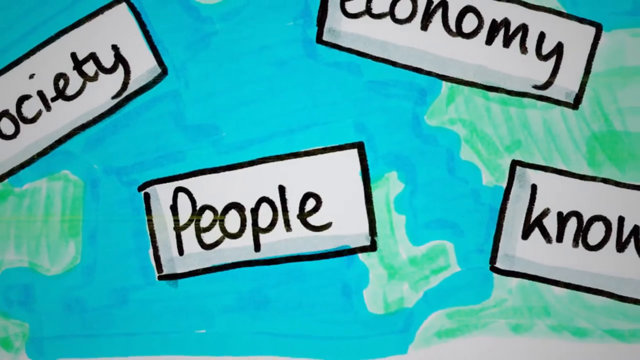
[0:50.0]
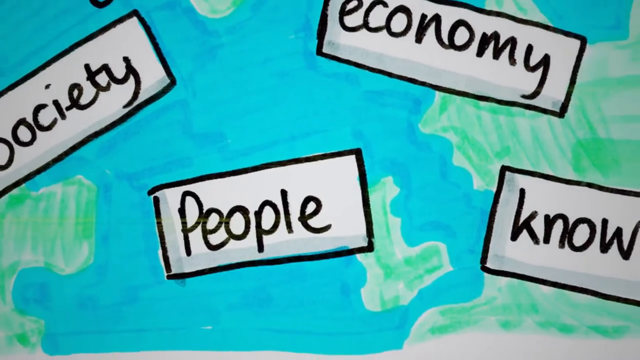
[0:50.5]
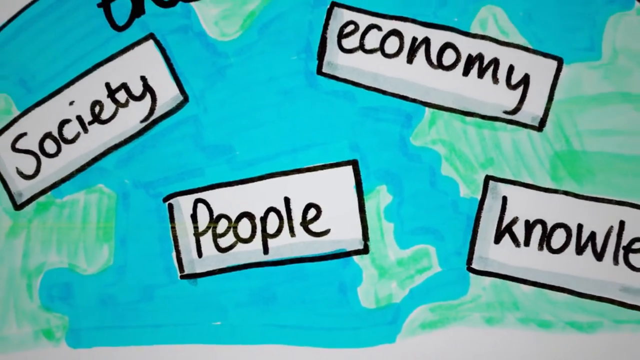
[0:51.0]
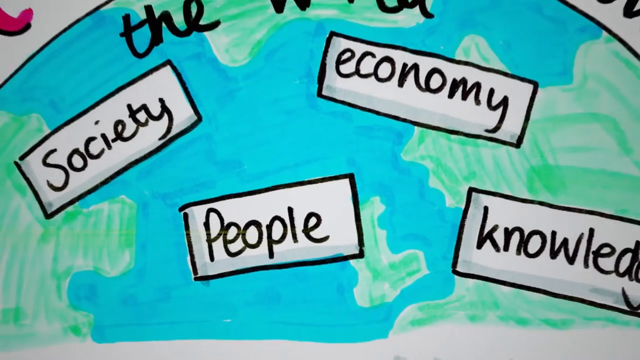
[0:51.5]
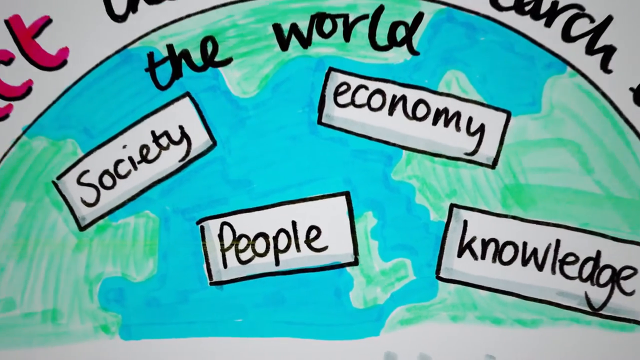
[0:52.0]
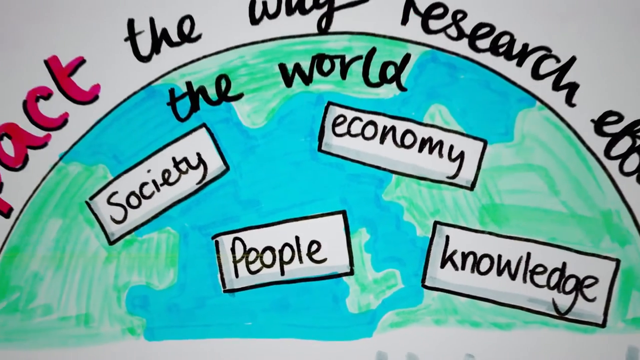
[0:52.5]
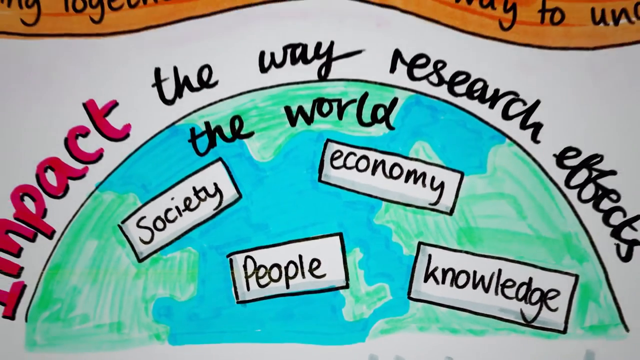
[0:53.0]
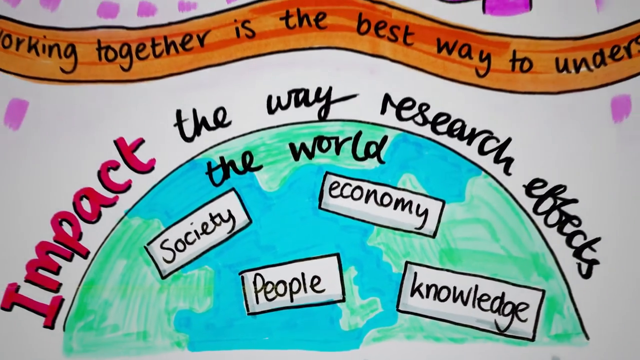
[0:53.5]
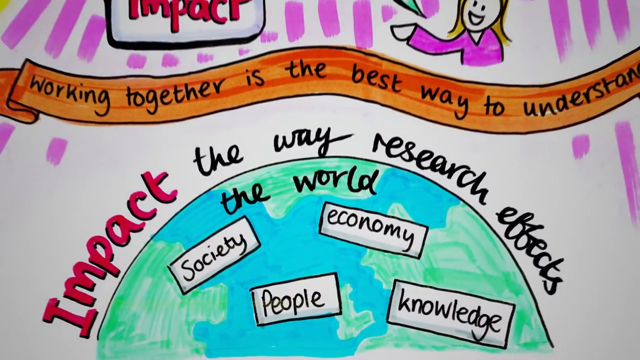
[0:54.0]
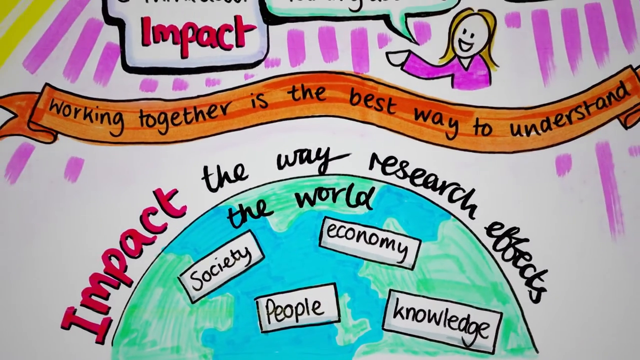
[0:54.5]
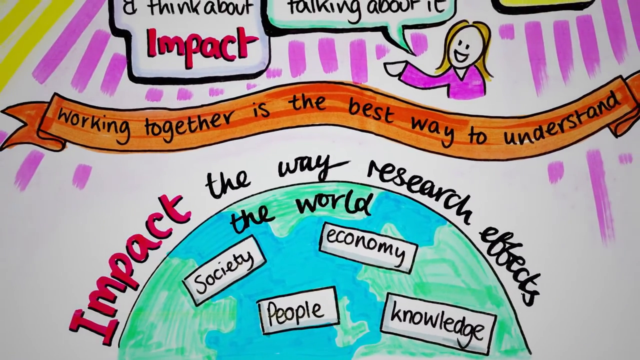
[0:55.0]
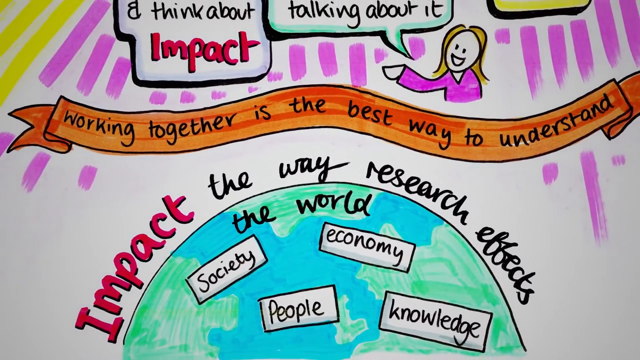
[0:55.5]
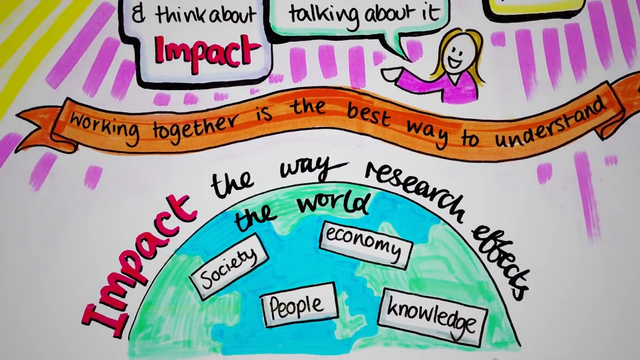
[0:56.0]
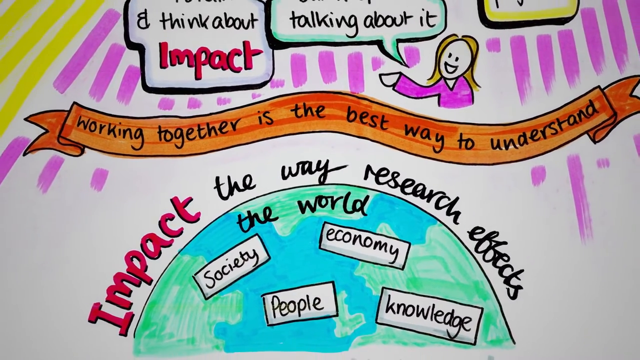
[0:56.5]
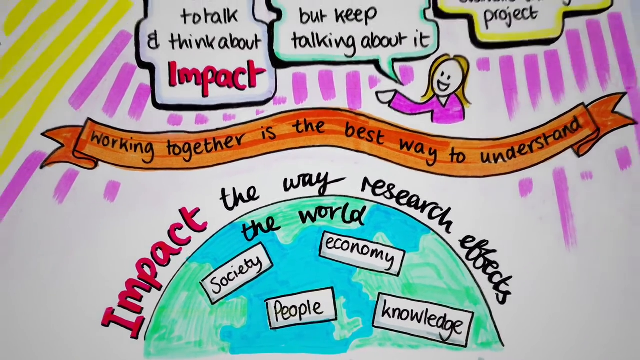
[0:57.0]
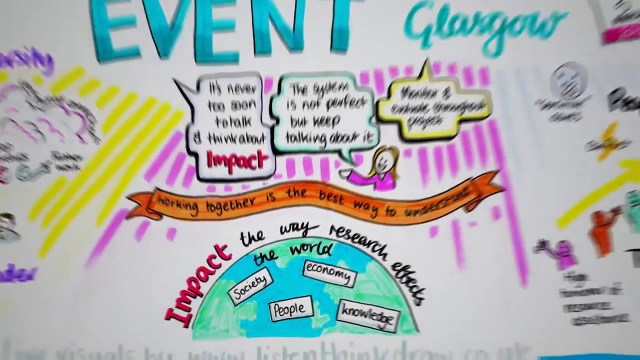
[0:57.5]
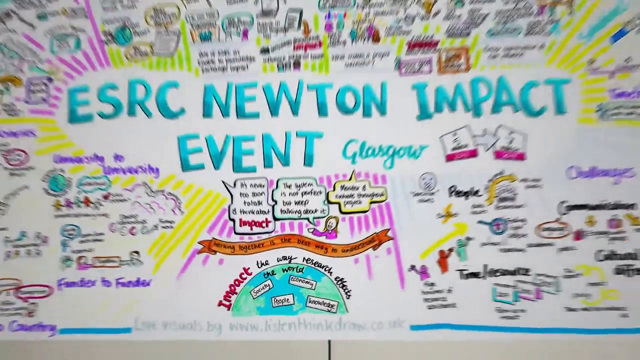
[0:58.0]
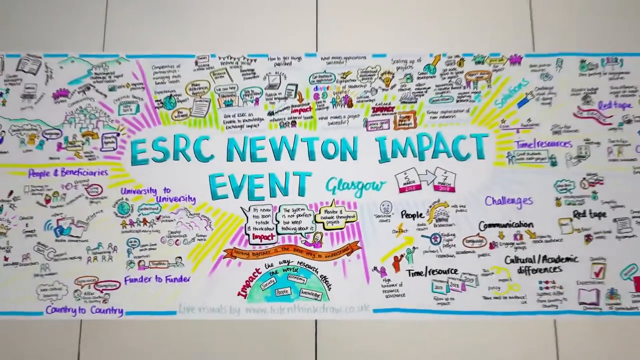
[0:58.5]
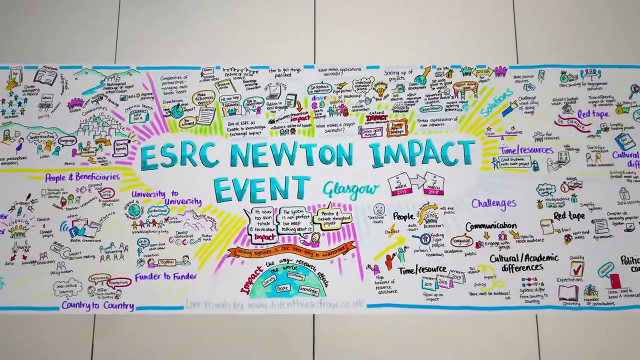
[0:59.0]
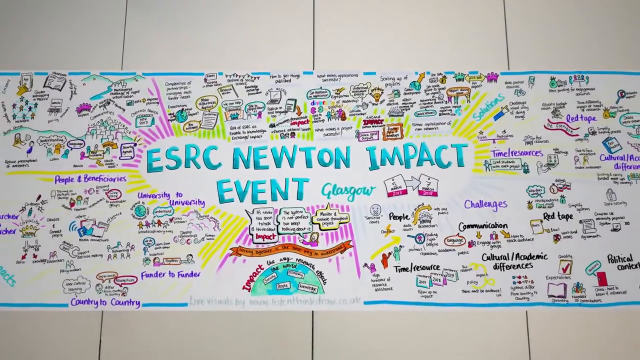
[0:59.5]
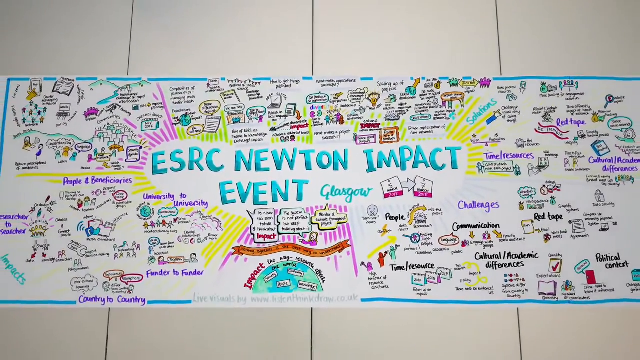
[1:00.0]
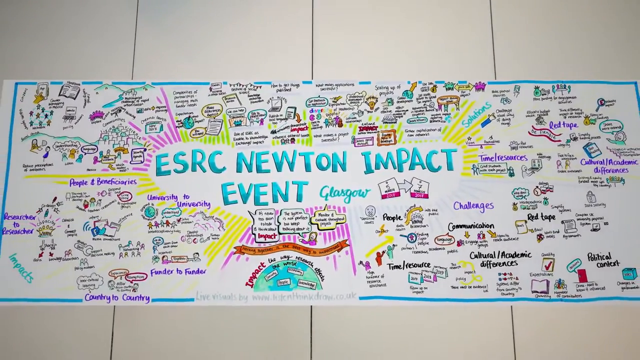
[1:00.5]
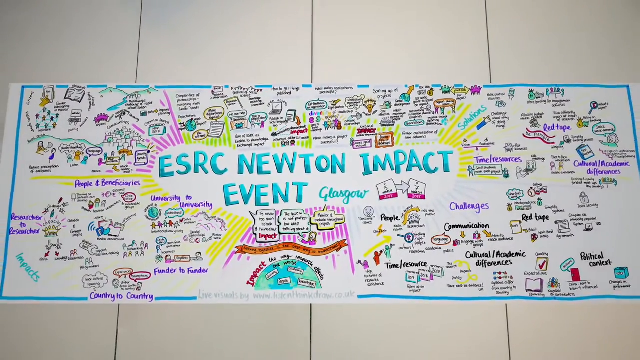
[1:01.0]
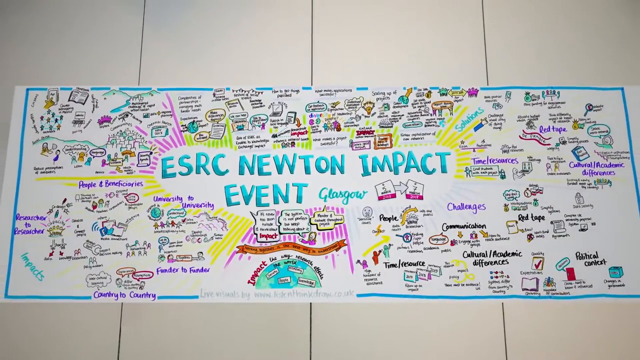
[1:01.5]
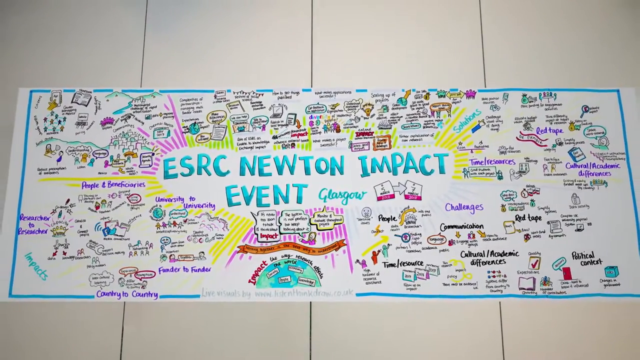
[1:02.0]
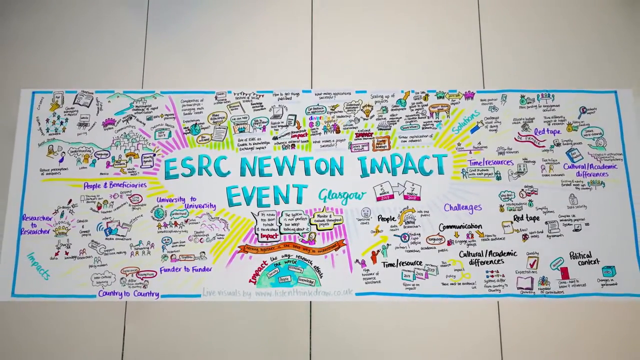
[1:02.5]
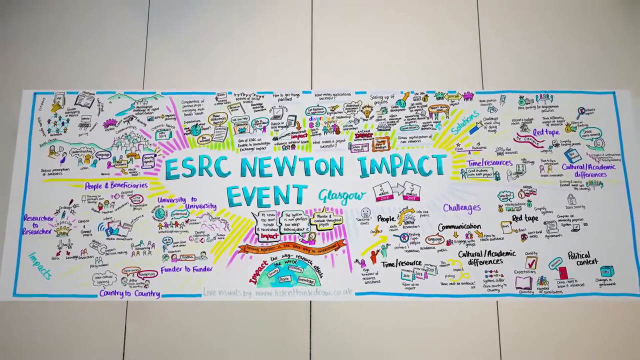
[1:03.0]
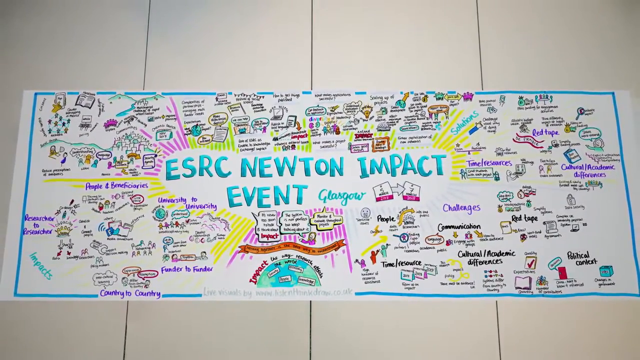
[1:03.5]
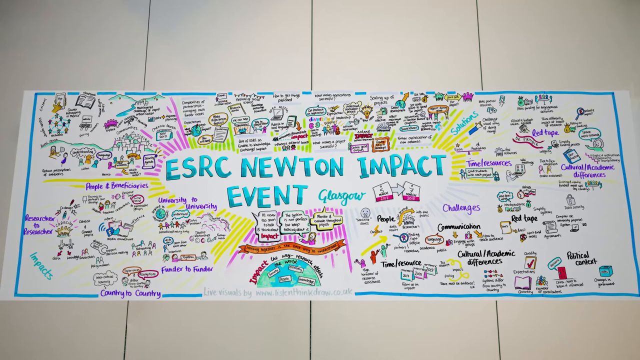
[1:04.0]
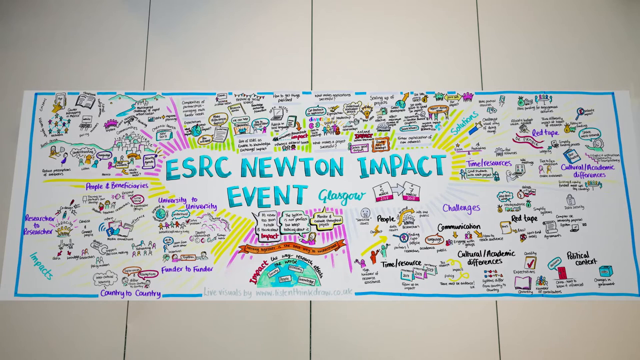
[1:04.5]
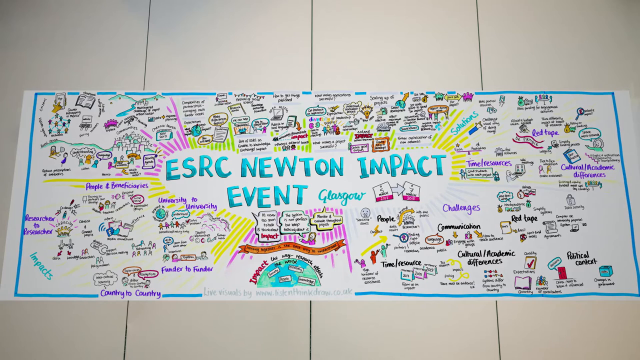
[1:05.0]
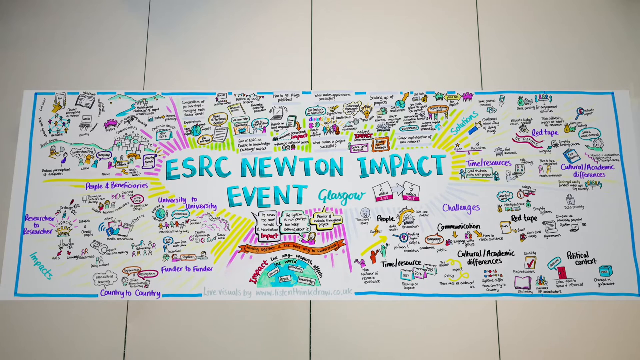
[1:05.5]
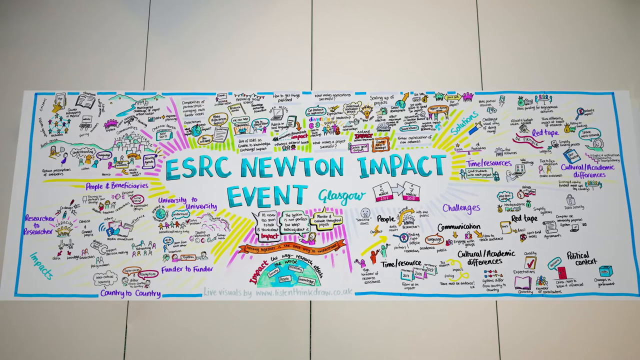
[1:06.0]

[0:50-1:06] A zoomed-in image shows the words "society, people, economy, and knowledge." As the camera zooms out, these words turn out to be written onto a doodle of the Earth. Above the doodle of the Earth is the text "impact the way research affects the world," and an orange ribbon drawn above says "working together is the best way to understand." The shot then zooms out to show everything together on the whiteboard, which looks very colorful and loud, while the main text "ECRS Newton Impact Event, Glasgow" is still visible. The video was probably made at some kind of conference for people who manage other people, teaching them about diversity and how to treat people in the workplace.